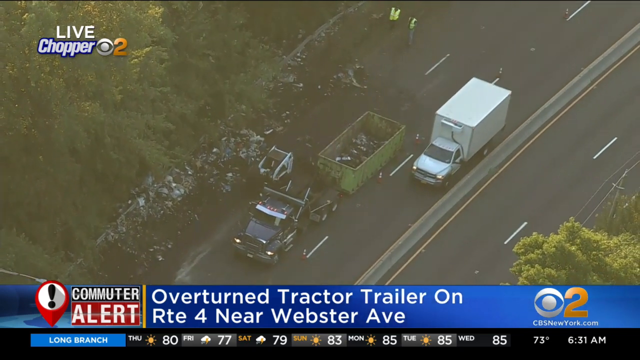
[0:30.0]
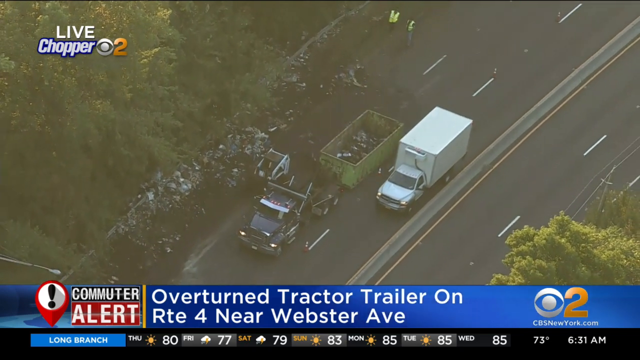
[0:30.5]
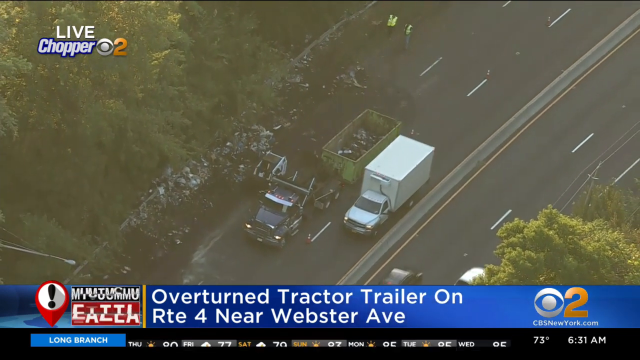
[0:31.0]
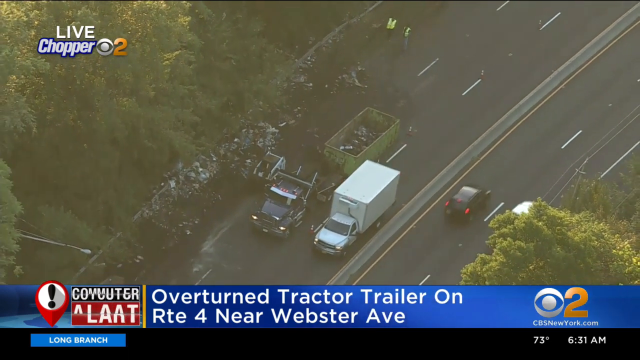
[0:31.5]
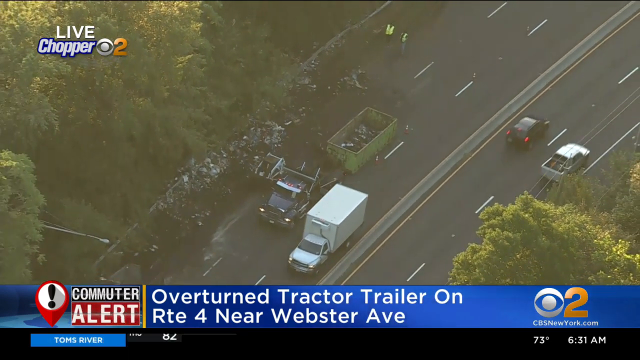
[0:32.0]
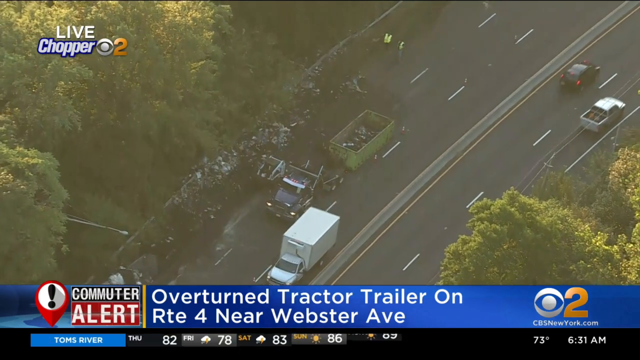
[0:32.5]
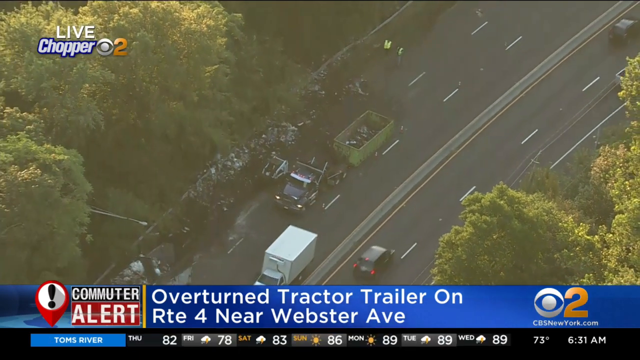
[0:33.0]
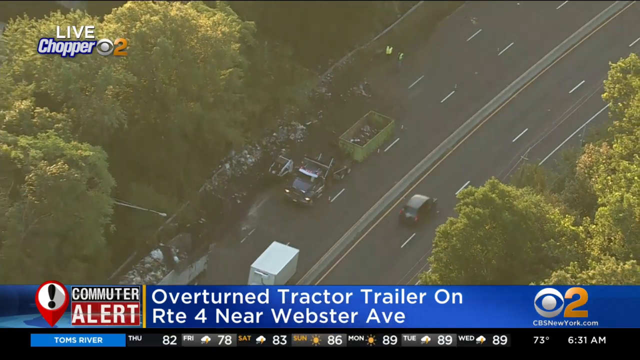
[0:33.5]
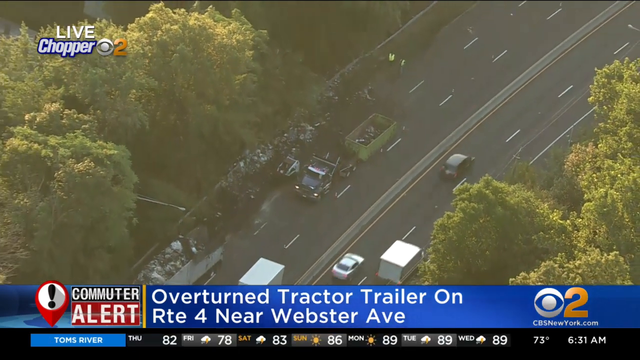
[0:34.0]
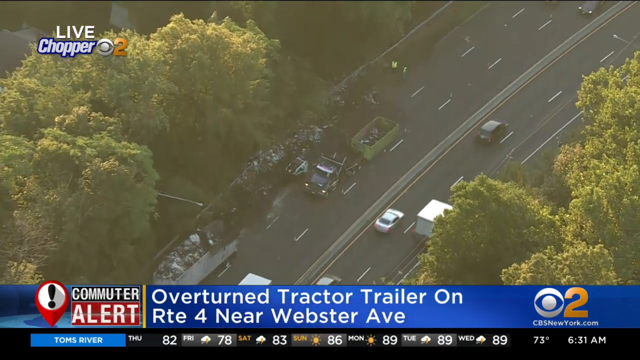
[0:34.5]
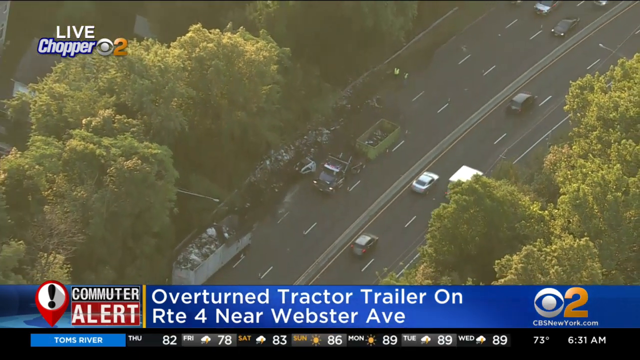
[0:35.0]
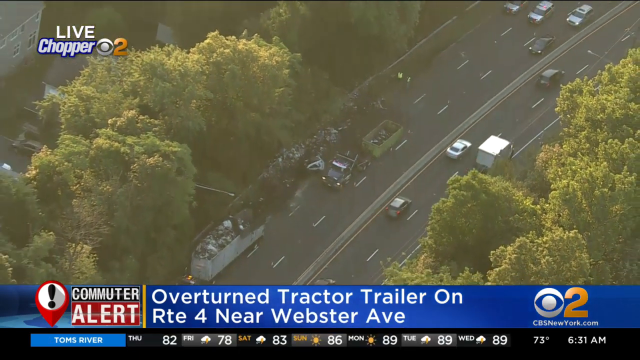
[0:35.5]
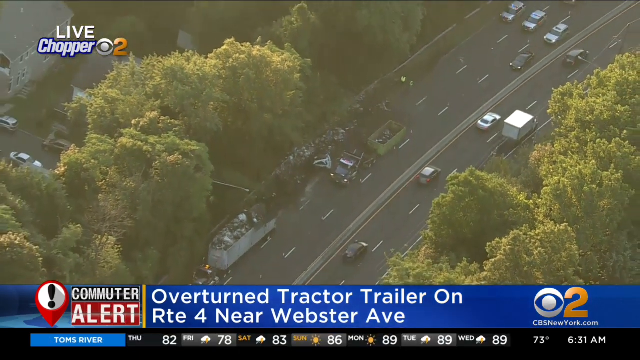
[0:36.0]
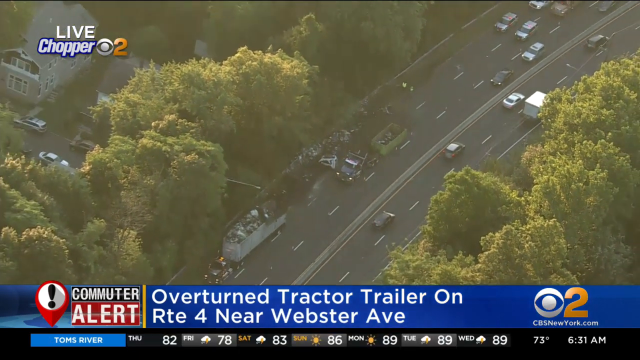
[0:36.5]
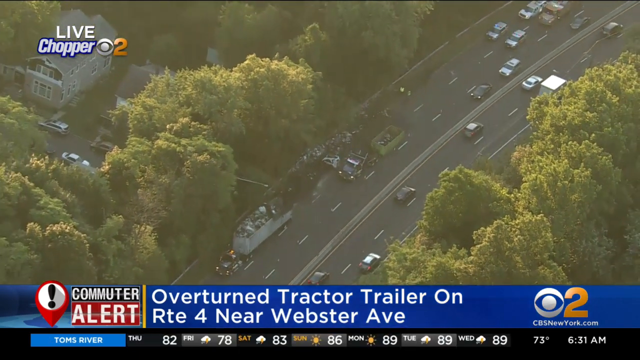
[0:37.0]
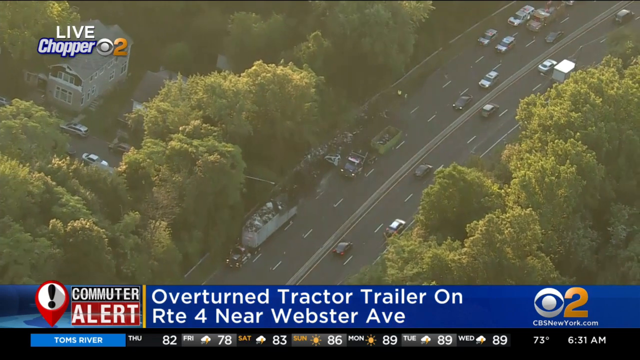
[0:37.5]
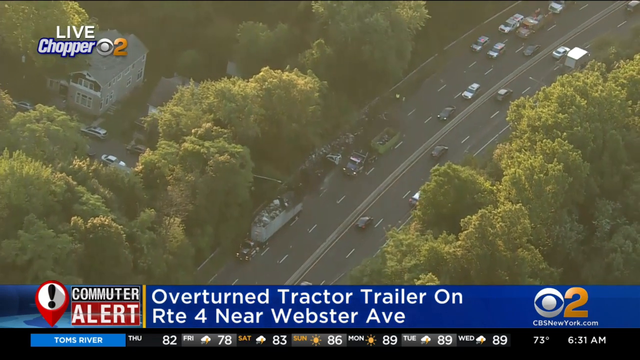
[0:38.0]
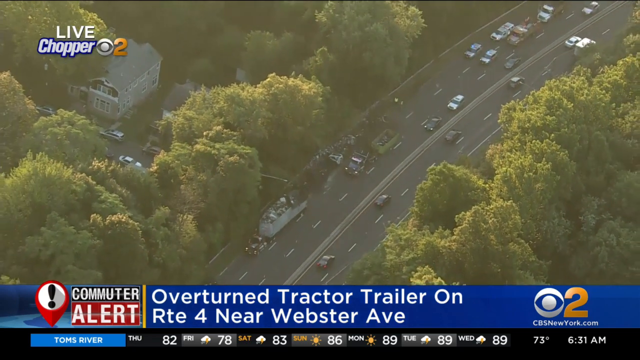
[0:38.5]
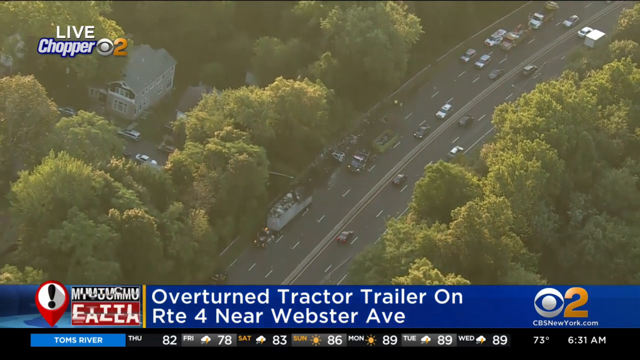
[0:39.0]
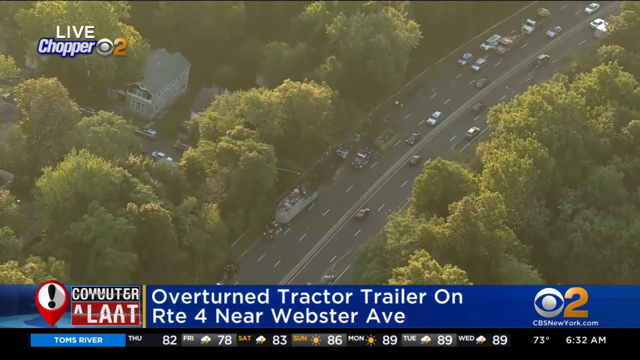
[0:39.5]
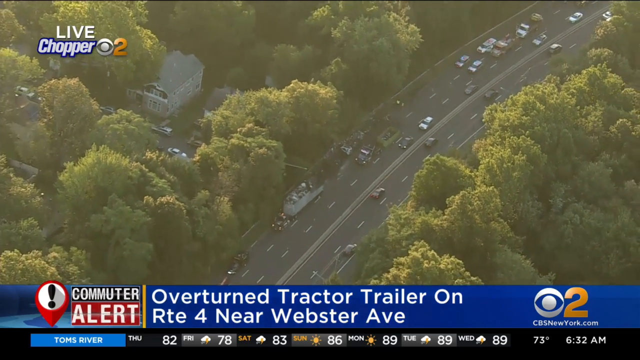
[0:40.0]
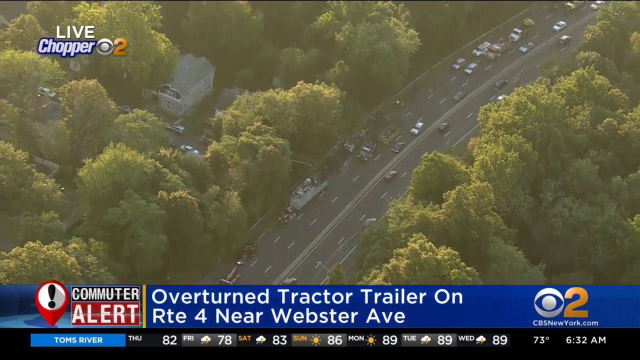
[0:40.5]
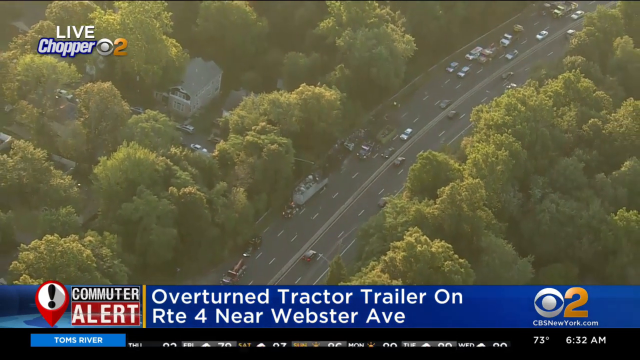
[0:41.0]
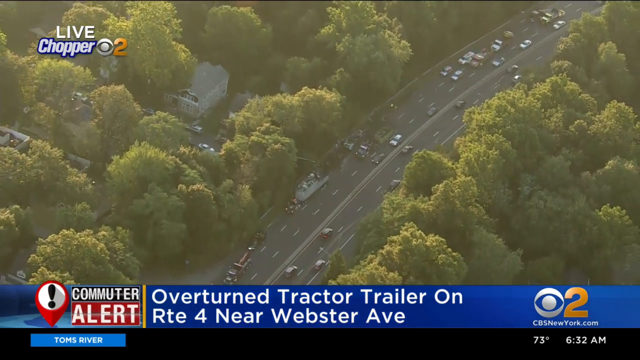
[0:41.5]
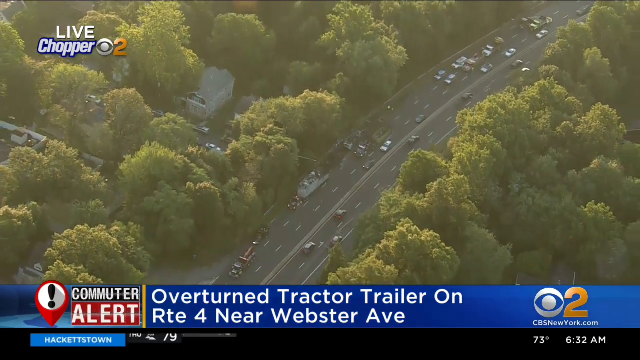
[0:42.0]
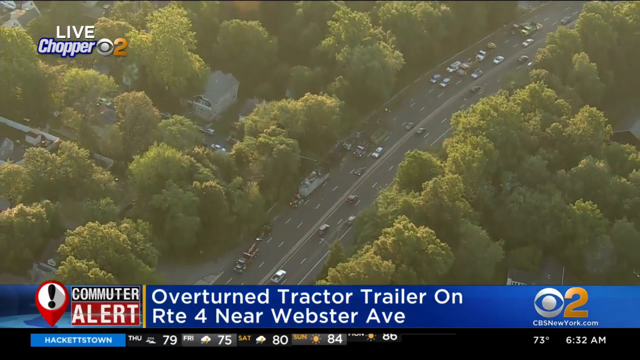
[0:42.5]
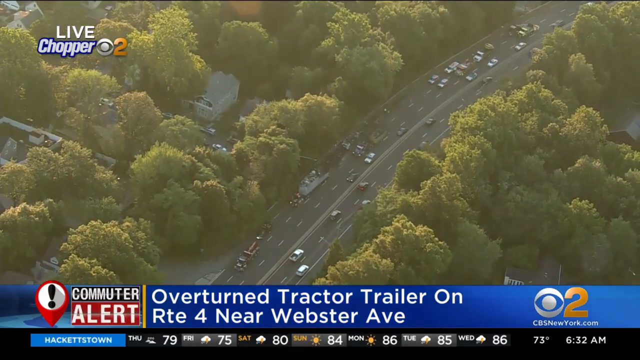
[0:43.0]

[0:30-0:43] The footage is taken by a camera in a chopper hovering in the sky over the overturned tractor trailer on RTE4 near Webster Avenue. The camera keeps going higher and the image of the scene becomes smaller and smaller, as the chopper seems to be leaving the scene, either moving away or zooming out. The view widens from the road to the whole surrounding area: on the other side of the road there is what looks like a school, along with houses, and the roads are a bit far from the camera.